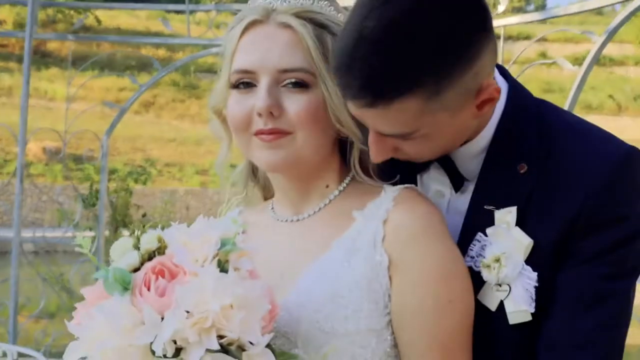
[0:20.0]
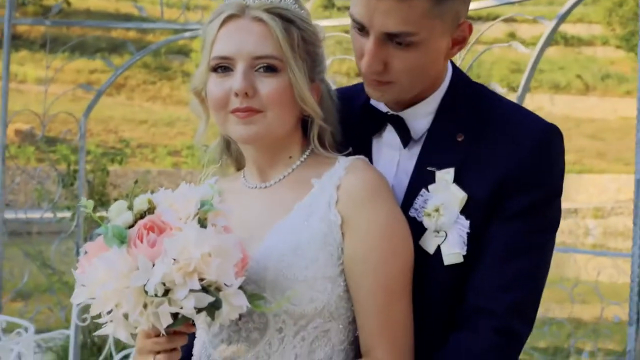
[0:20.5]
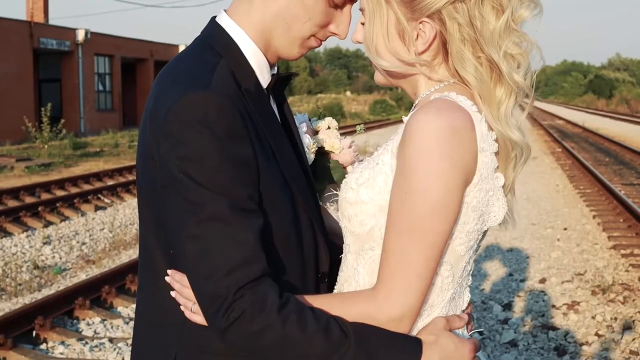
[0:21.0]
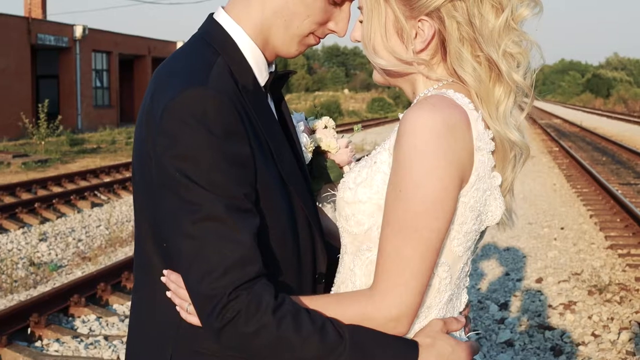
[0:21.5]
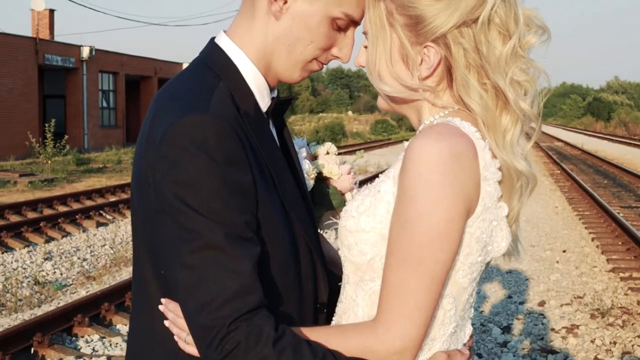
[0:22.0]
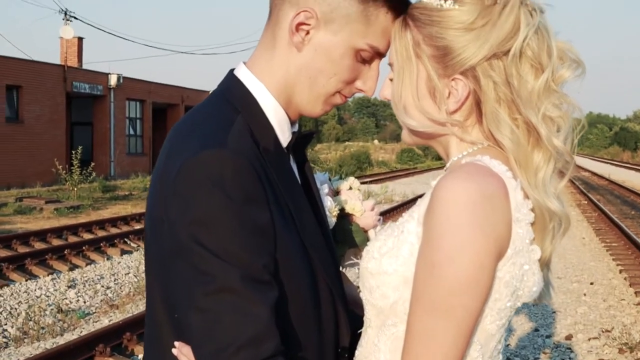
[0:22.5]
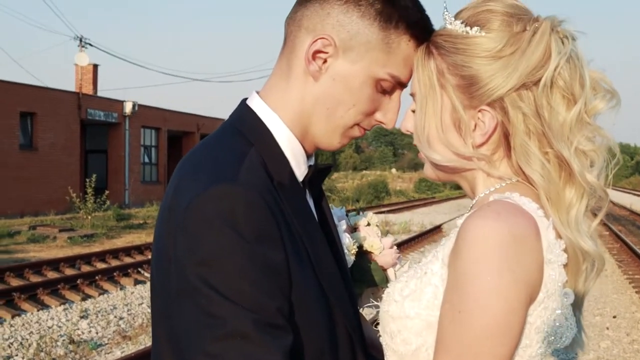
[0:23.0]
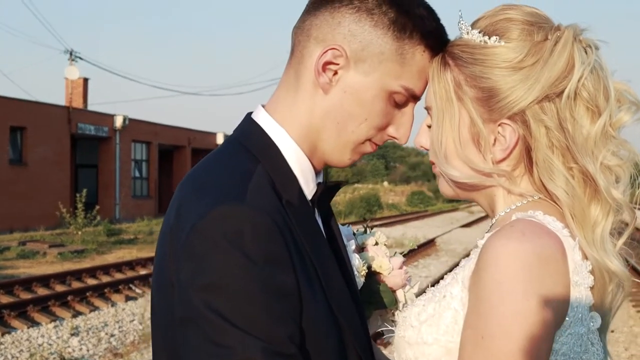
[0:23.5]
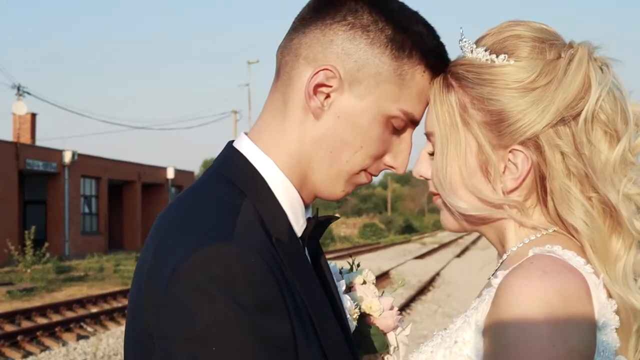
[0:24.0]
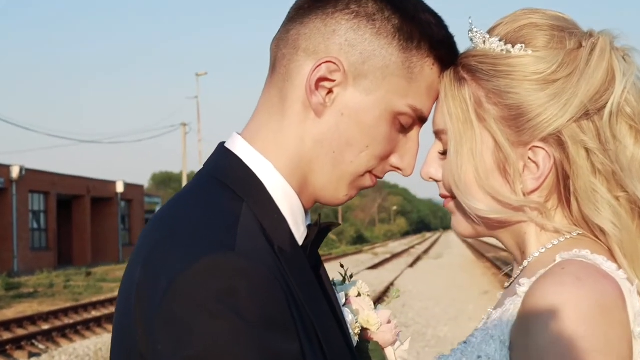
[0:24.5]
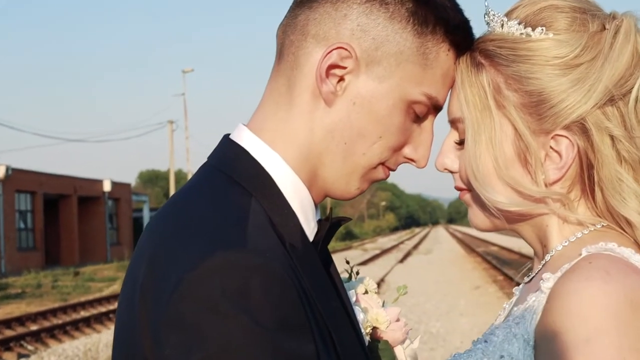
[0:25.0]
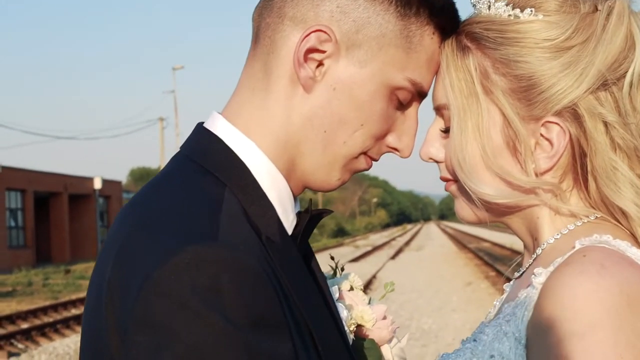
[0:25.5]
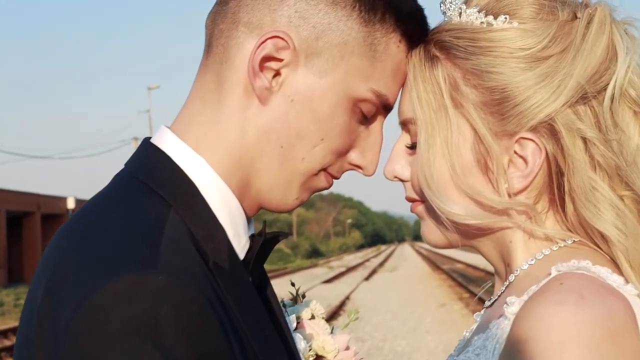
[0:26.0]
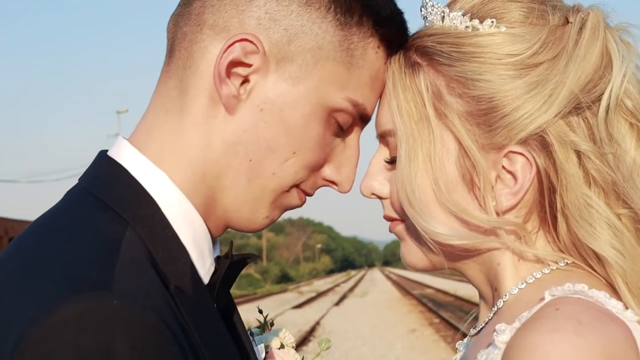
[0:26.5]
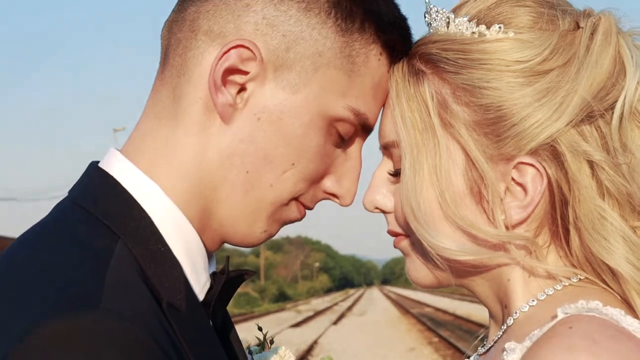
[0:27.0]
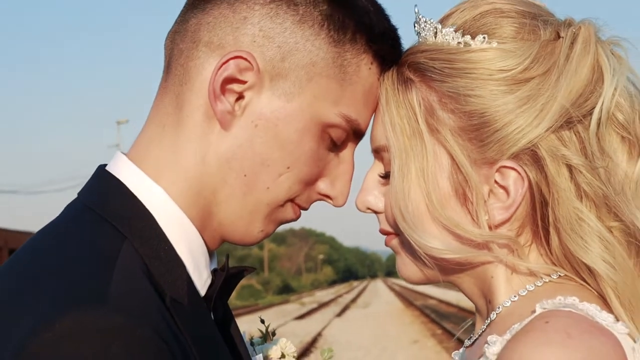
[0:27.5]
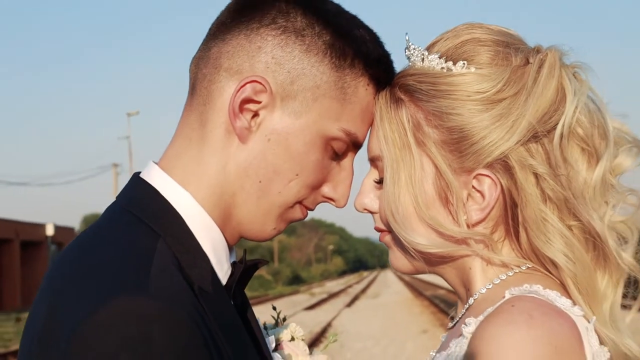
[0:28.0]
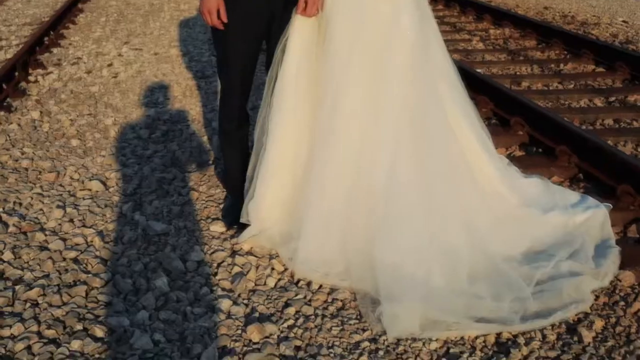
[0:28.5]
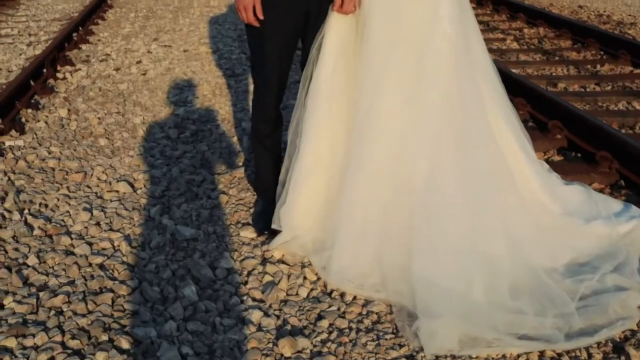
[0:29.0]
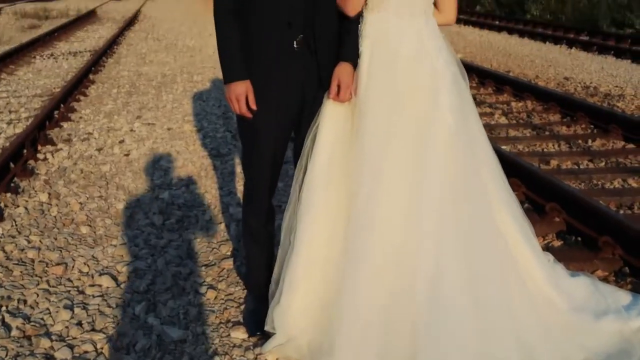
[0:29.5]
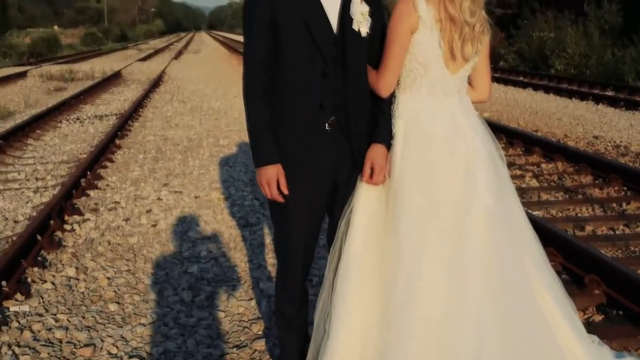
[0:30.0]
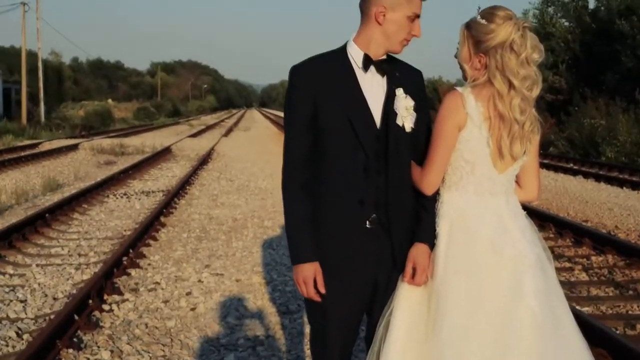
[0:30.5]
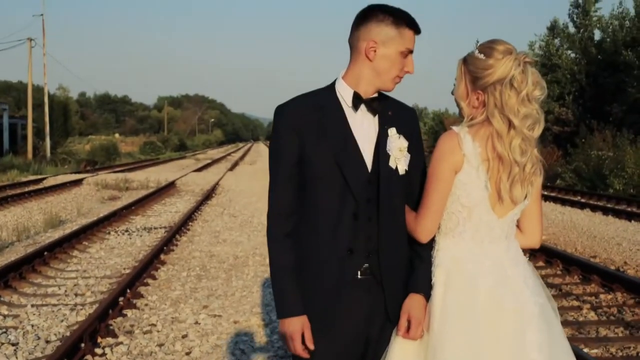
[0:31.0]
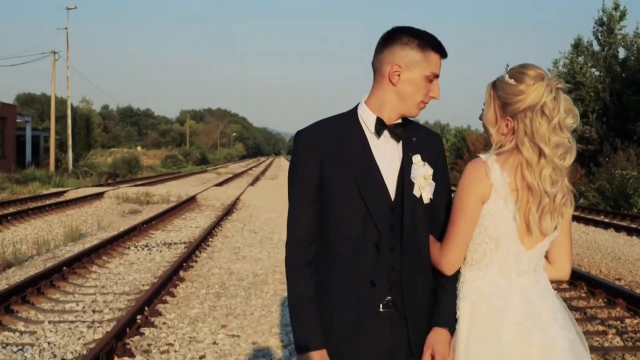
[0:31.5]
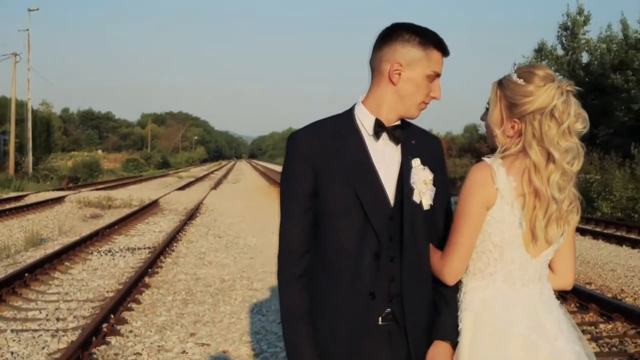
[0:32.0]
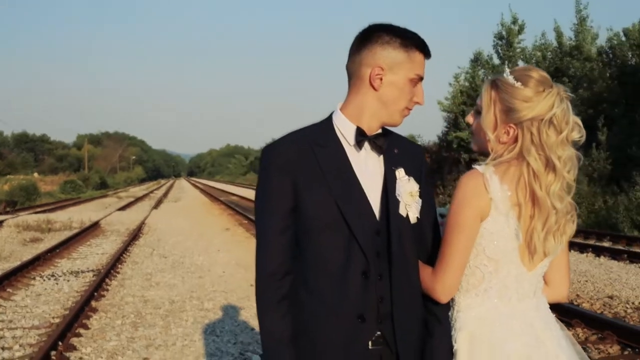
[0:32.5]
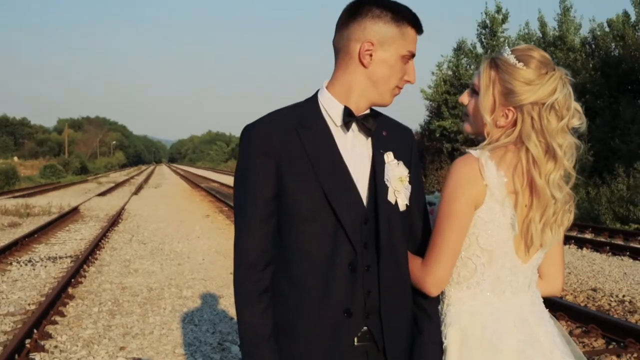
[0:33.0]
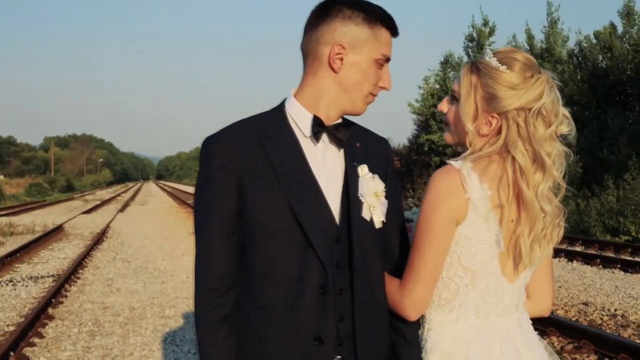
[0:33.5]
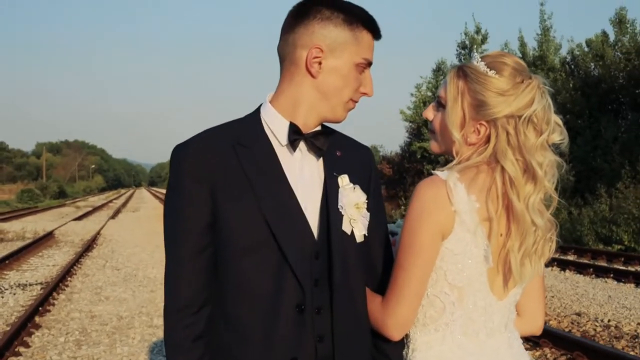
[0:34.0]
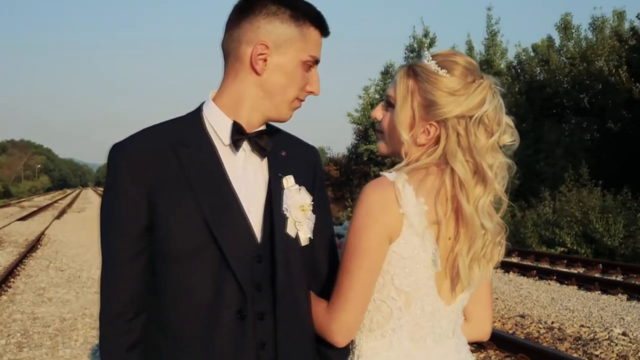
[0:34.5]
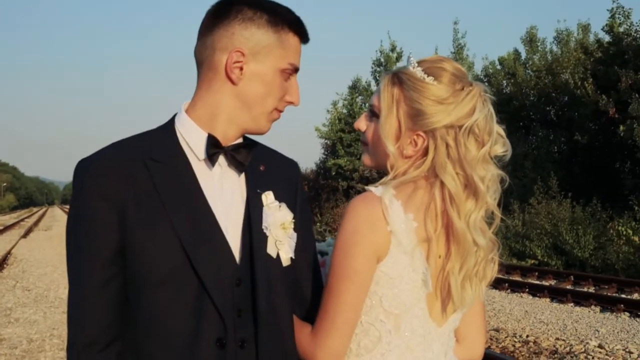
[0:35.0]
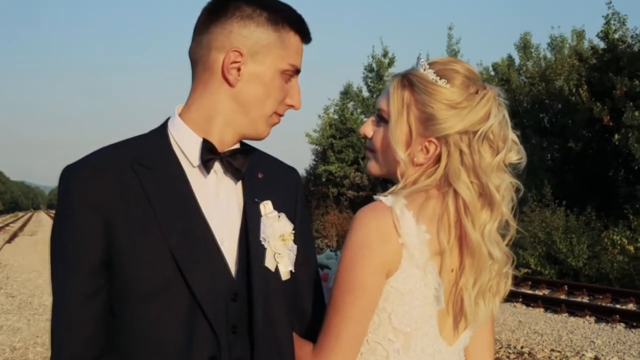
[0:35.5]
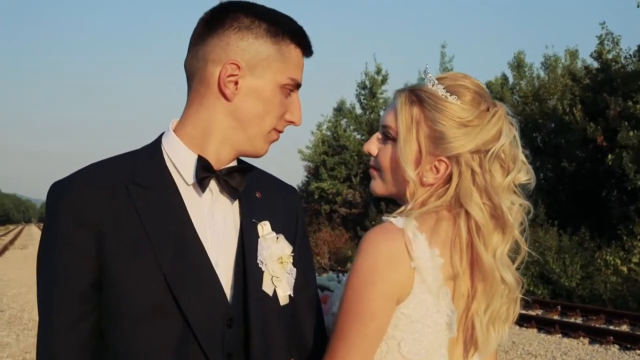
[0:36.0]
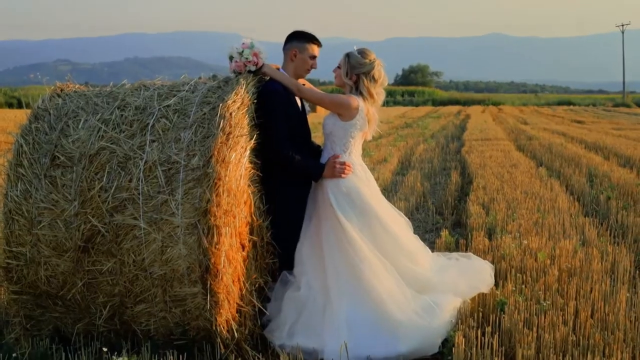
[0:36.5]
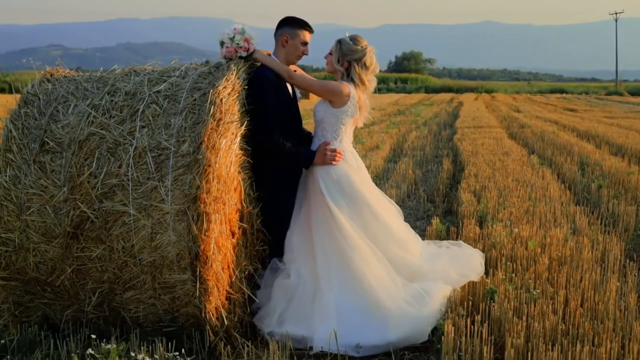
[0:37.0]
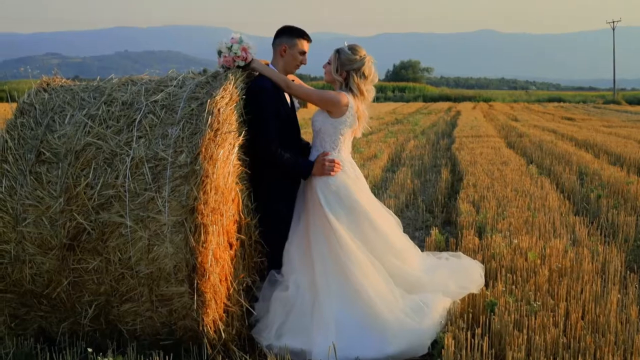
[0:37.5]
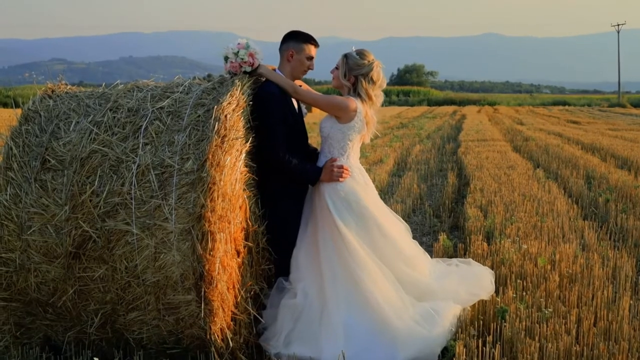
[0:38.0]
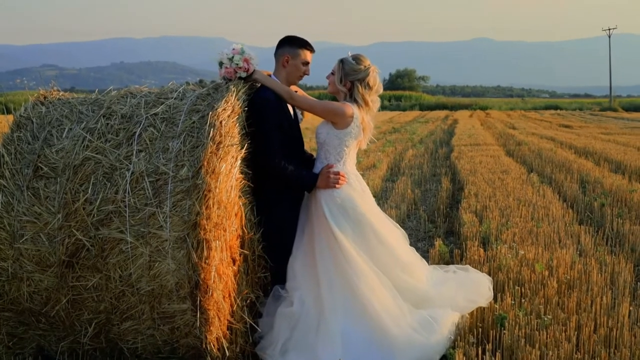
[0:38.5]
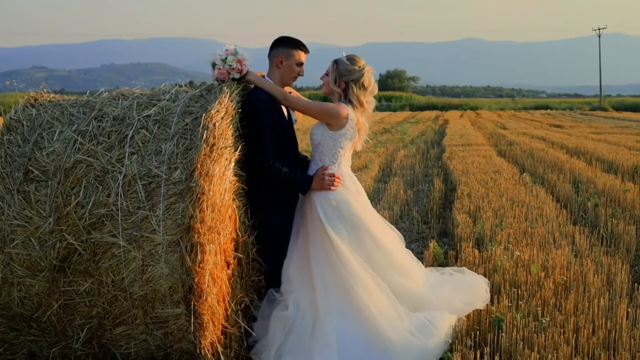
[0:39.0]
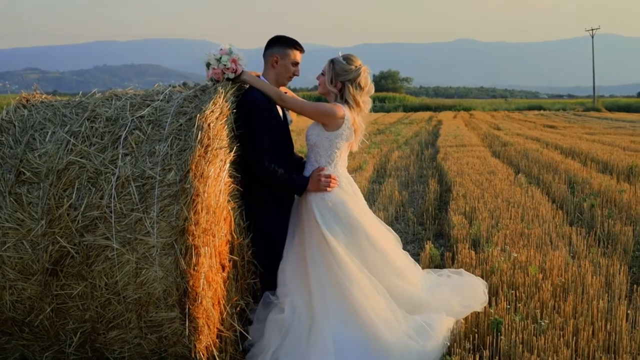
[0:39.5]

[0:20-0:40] The two of them stand facing each other, holding each other forehead to forehead with their eyes closed. Their arms are linked, and they kind of face each other, gazing at one another. They appear to possibly be taking pictures, maybe for a wedding album. They are in what looks to be kind of a field; she has her arms around him on his shoulders and he has his arms around her waist. She gazes ahead while he kind of looks down.